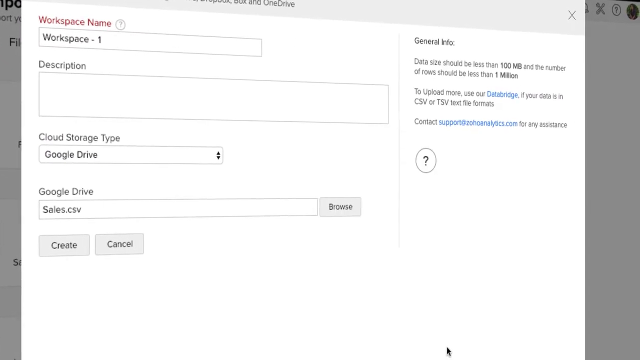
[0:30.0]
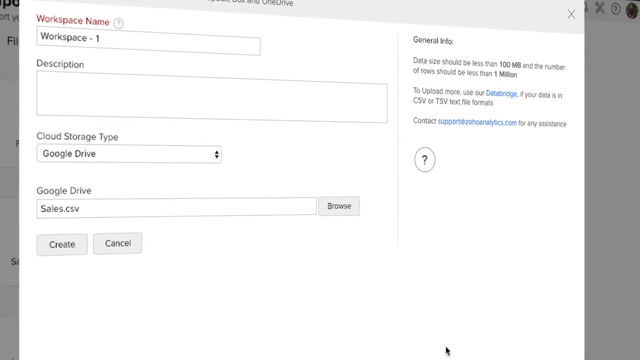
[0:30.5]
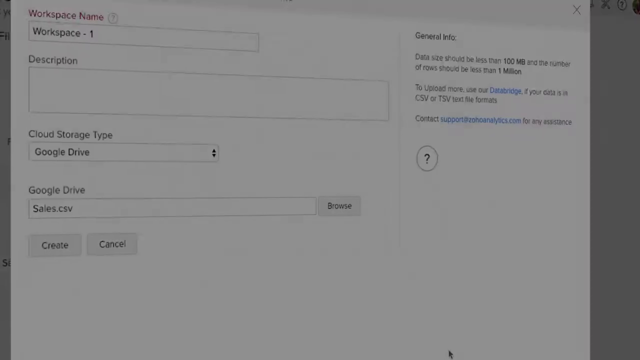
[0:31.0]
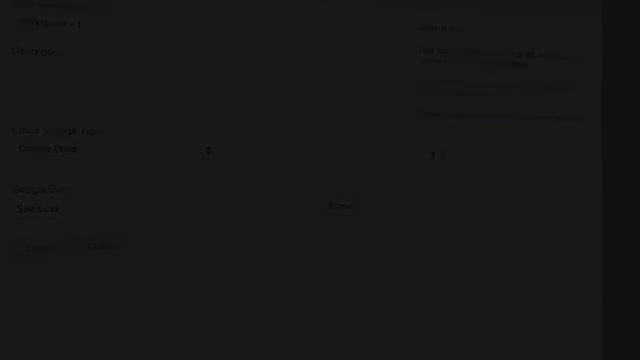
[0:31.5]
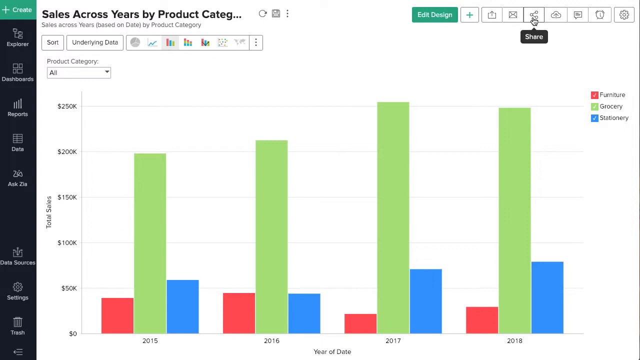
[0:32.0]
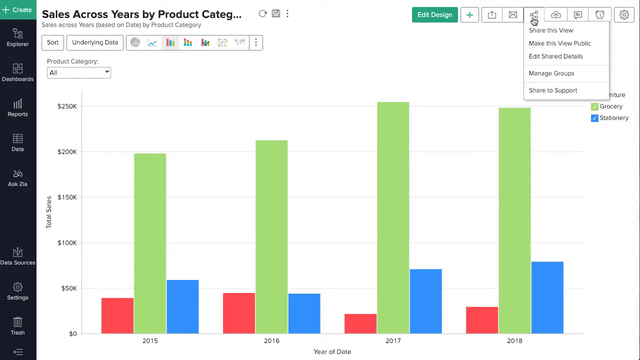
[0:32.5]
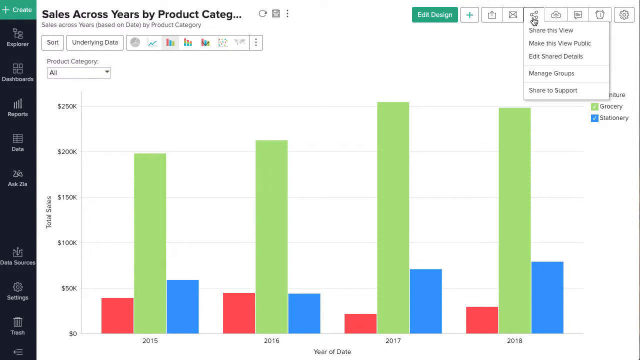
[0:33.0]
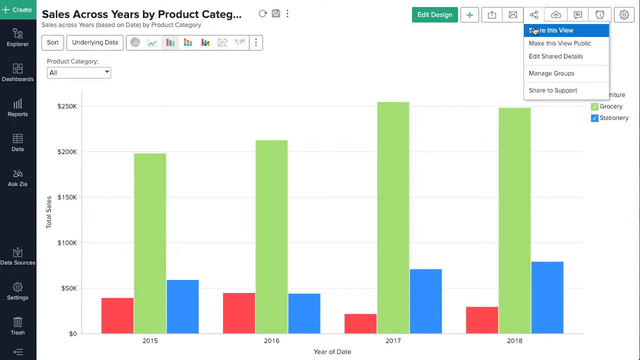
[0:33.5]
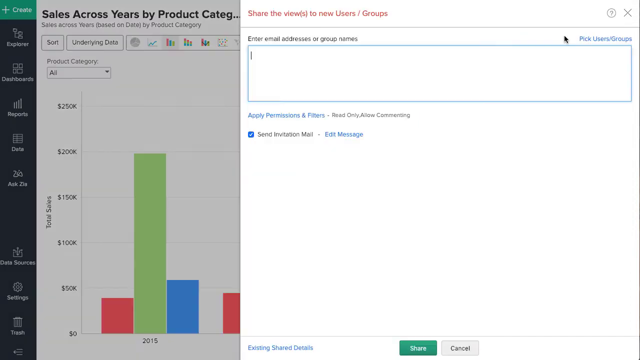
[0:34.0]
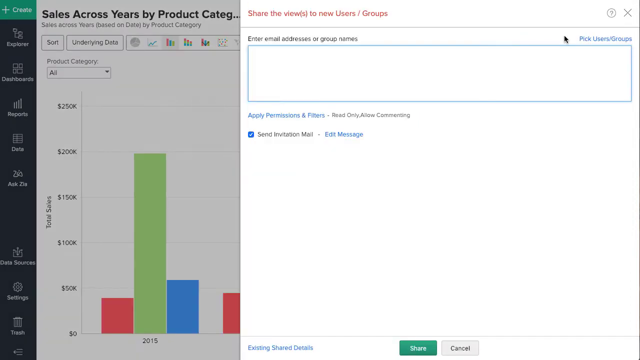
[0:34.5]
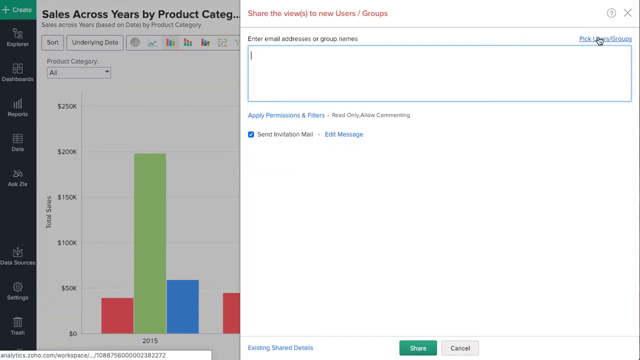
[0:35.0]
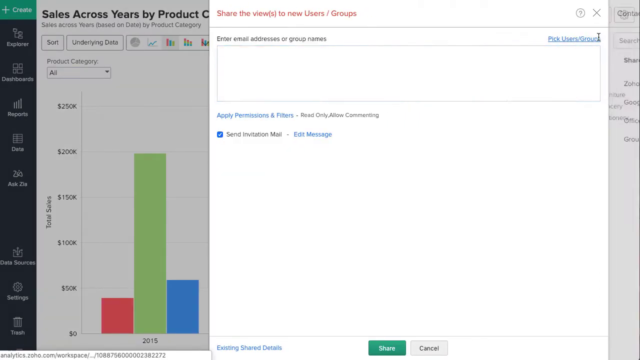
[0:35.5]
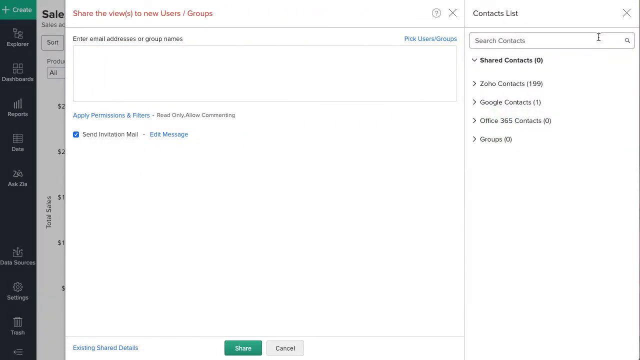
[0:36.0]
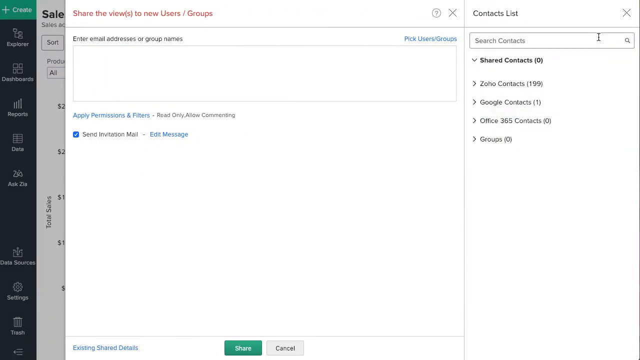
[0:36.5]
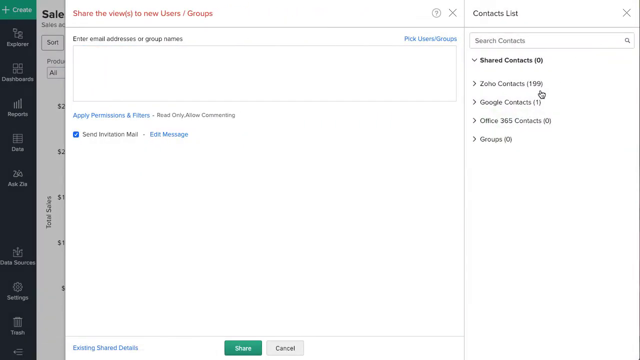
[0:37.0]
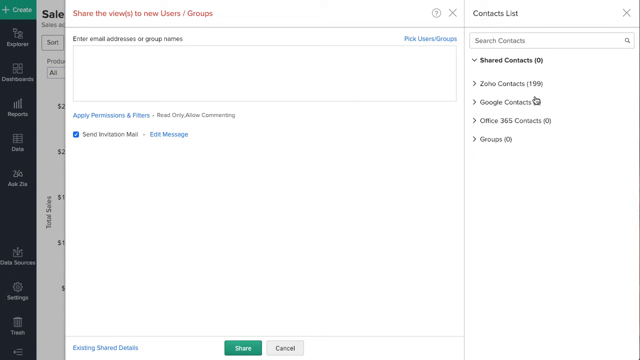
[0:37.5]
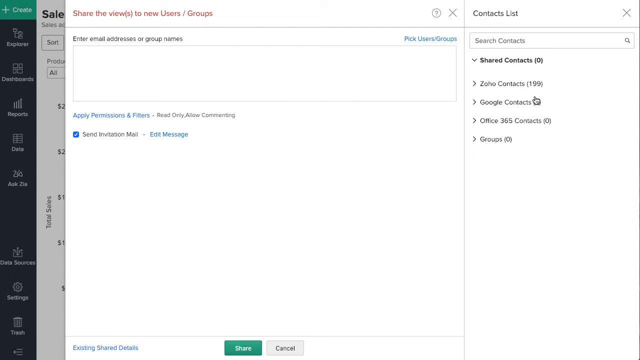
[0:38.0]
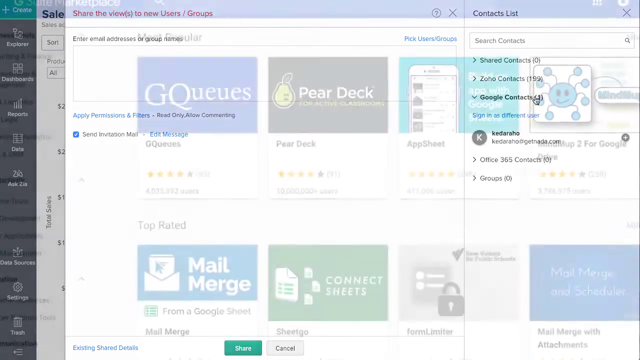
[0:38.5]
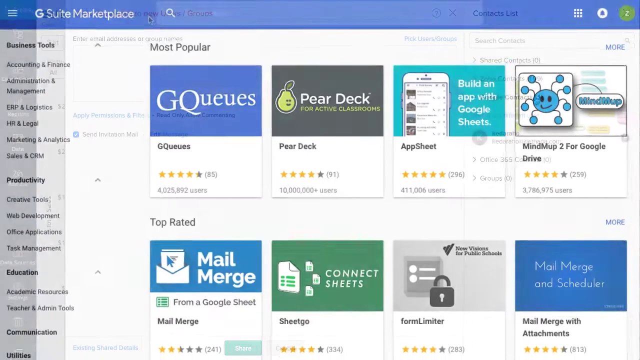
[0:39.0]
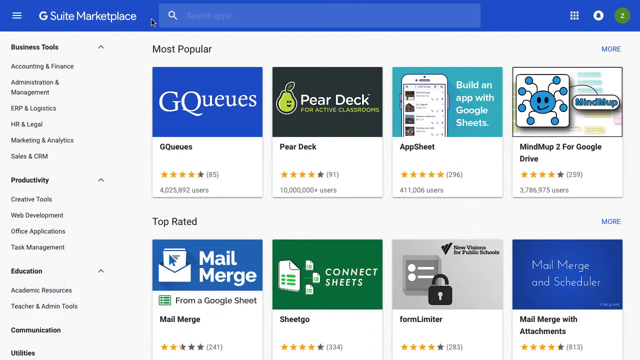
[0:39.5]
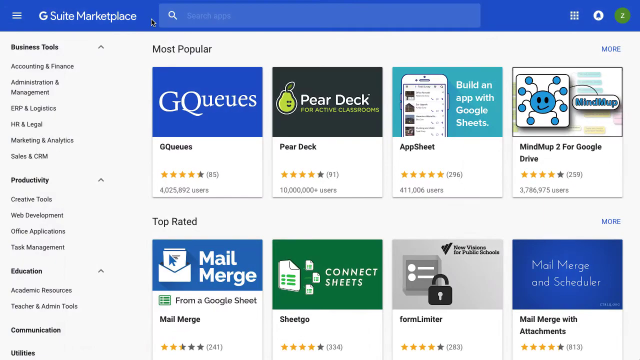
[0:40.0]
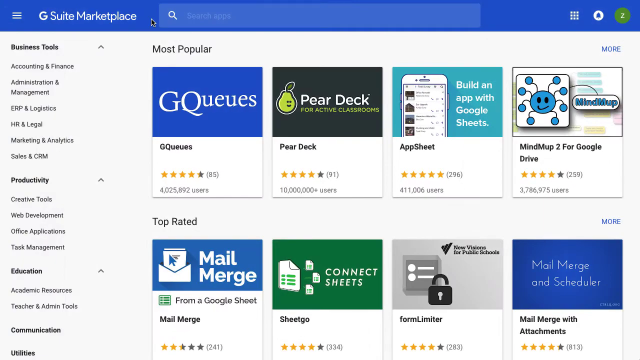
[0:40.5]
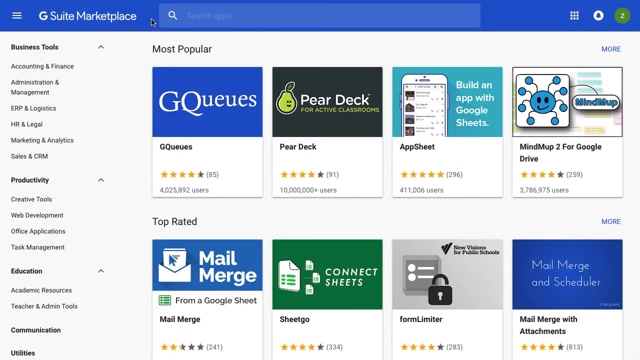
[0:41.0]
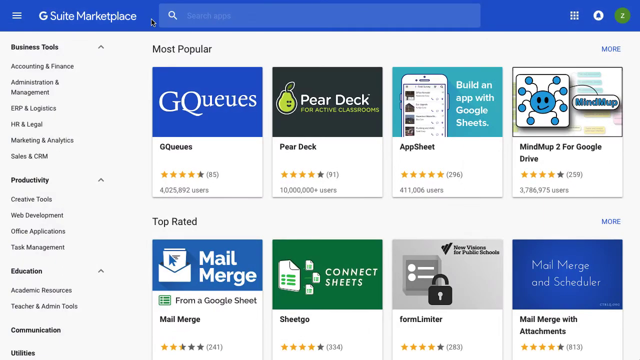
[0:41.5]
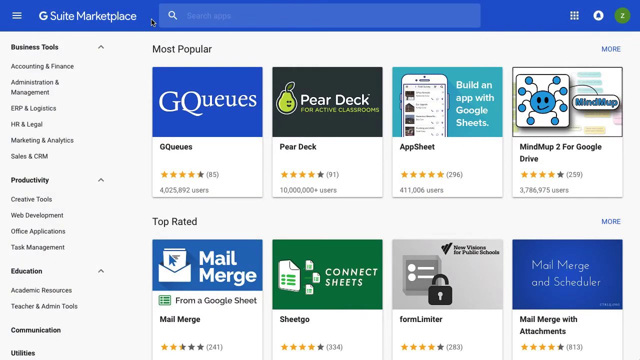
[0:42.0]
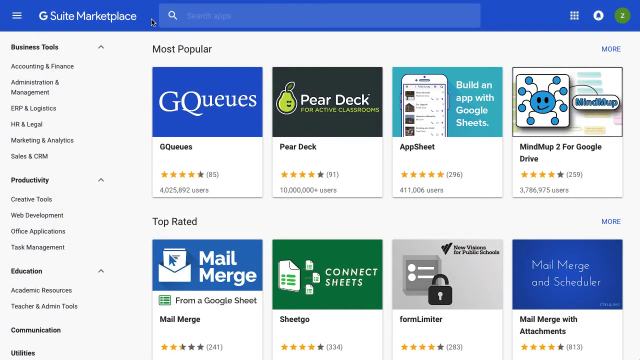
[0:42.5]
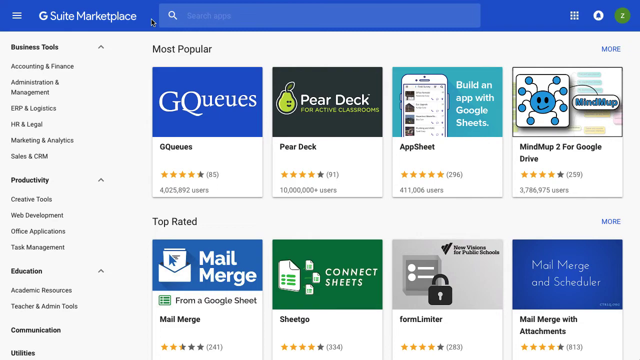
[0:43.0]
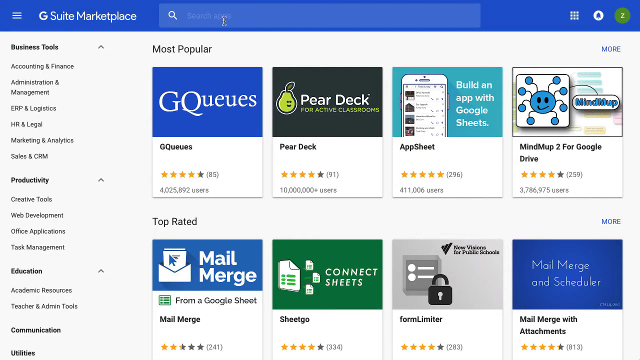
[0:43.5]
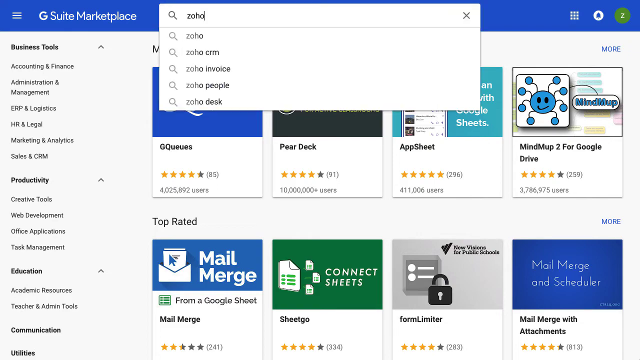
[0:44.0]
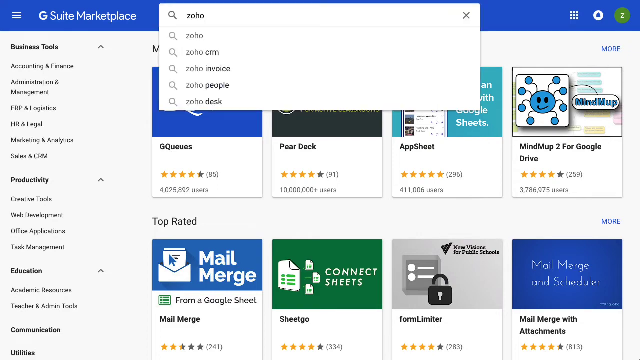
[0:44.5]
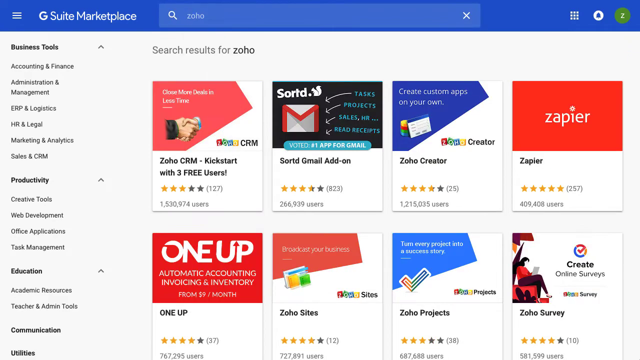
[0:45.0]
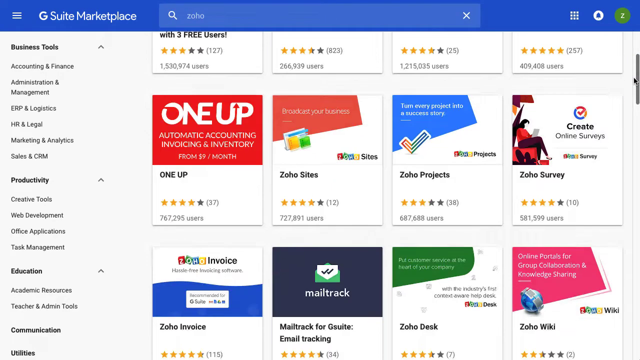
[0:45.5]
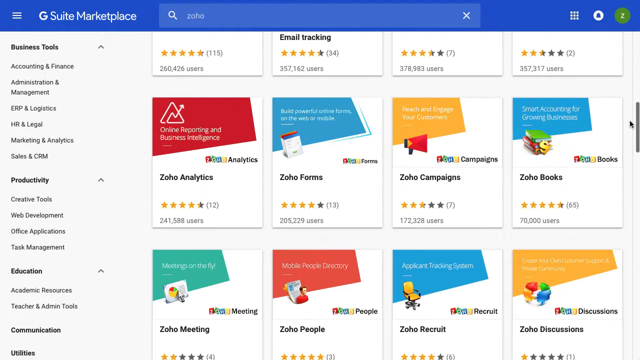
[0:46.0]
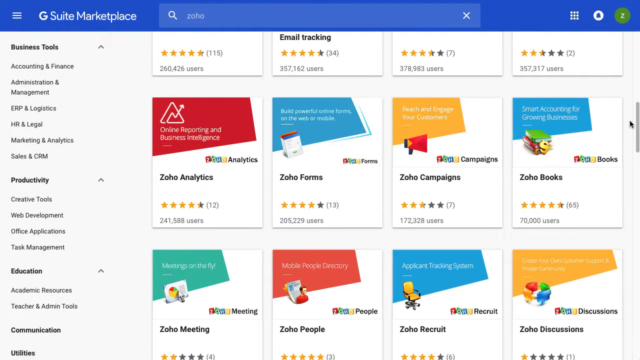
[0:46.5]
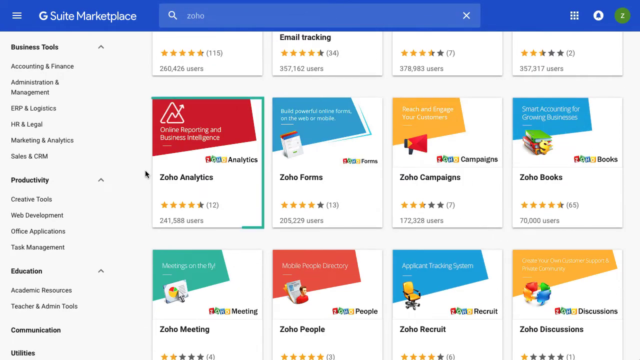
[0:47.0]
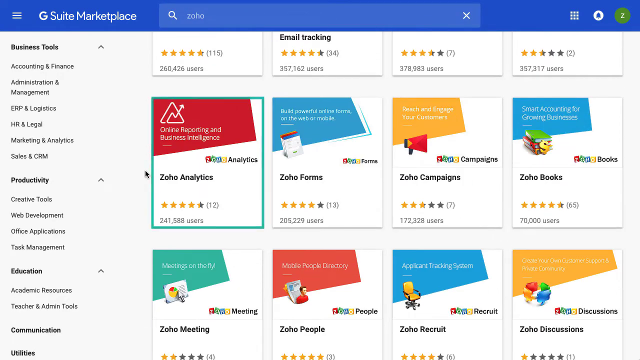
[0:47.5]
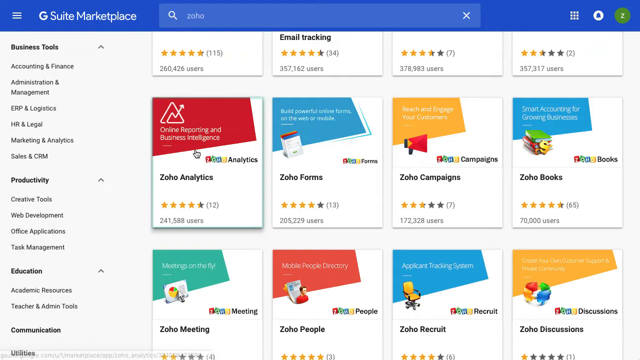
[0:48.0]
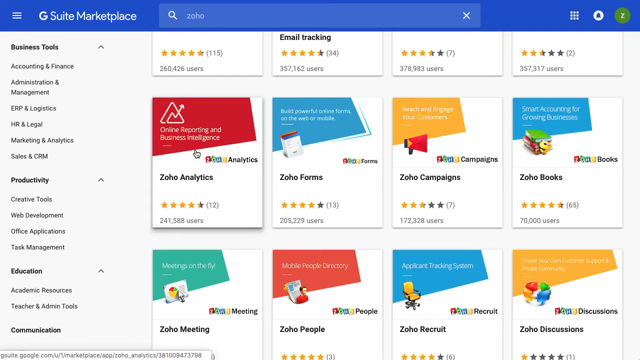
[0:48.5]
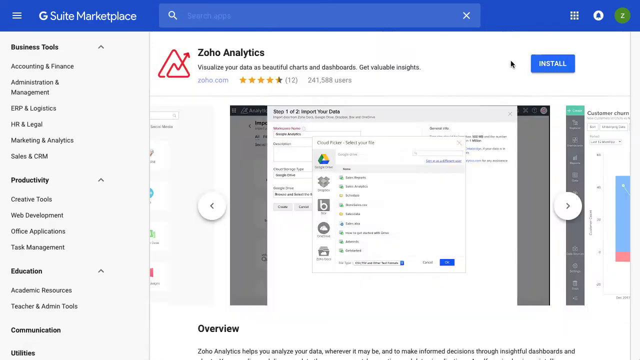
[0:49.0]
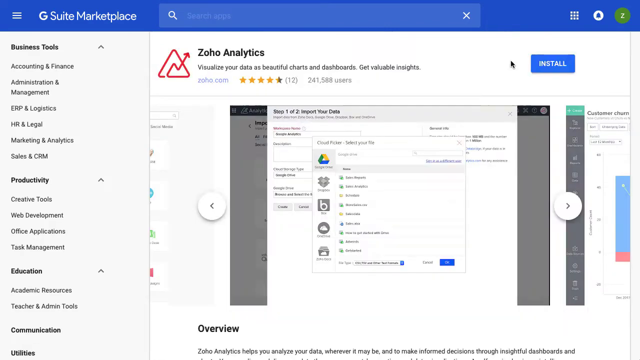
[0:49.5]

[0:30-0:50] A computer screen shows a series of bar graphs with green, red and blue bars. Each section has three bars; the green bar is always the tallest, and the red and blue bars are much shorter. Text at the top reads "sales across years by product category", with the category word cut off. The cursor moves to one of the tabs and clicks it. Another screen appears with red text at the top reading "share the views to new users / groups", a box for entering email addresses or group names, and some contacts on the right. The person clicks the Google Contacts tab. Next, a screen shows "G Suite Marketplace" at the top in white text over a blue bar, with a blue search bar to the right. Many apps are listed, such as Pear Deck, AppSheet and Mail Merge, along with star ratings. The person types Zoho, bringing up a number of Zoho apps, clicks the Zoho Analytics app, and hits the blue install button with white text. On the left is the Zoho Analytics logo, a red triangle with an arrow pointing up, and the page also shows some screenshots, the star rating and other information.